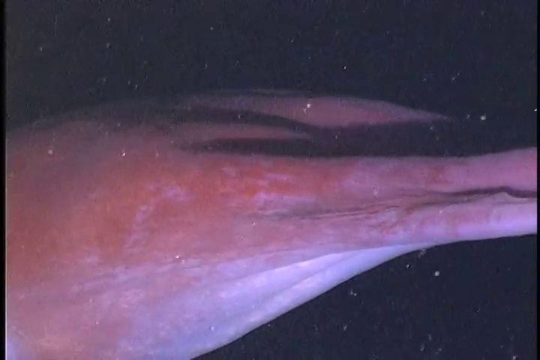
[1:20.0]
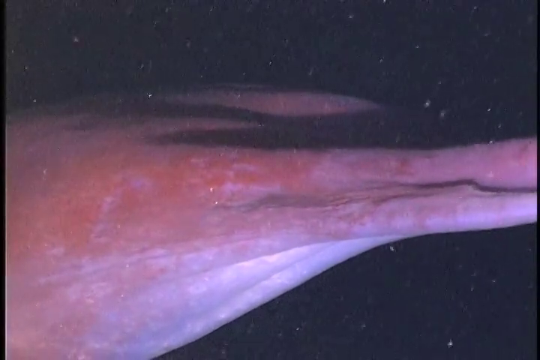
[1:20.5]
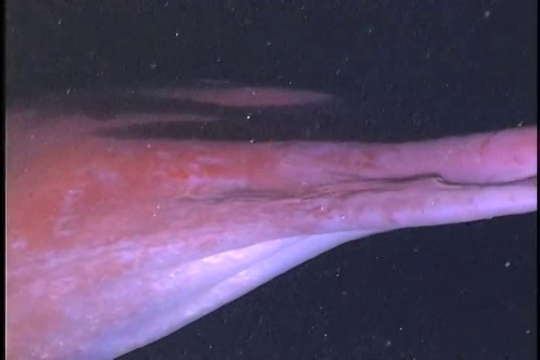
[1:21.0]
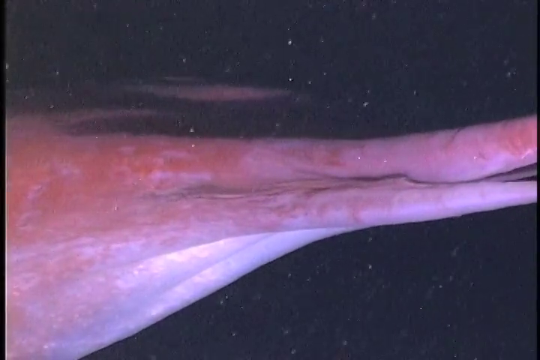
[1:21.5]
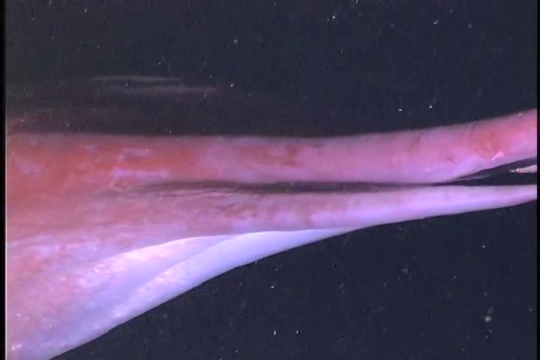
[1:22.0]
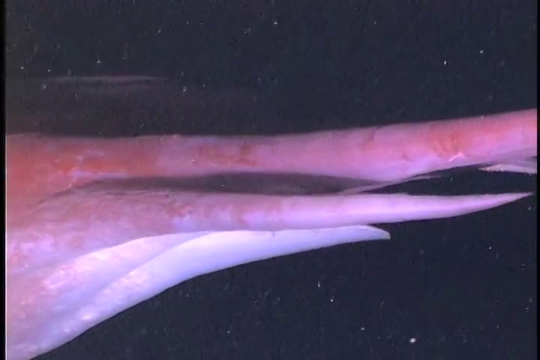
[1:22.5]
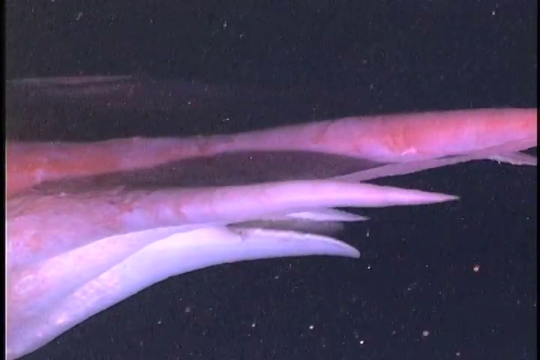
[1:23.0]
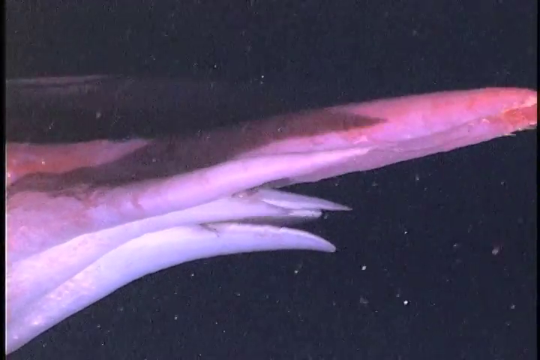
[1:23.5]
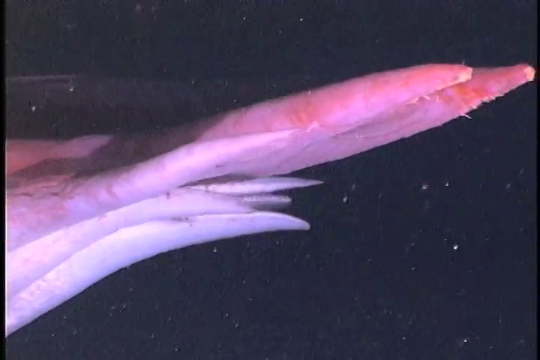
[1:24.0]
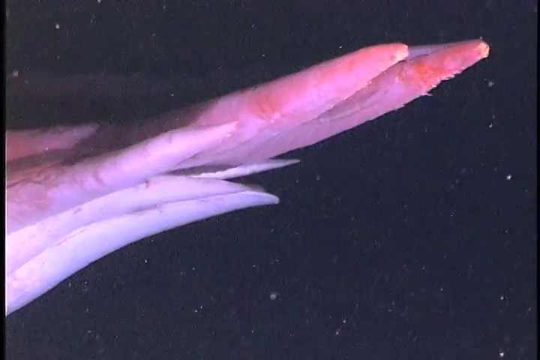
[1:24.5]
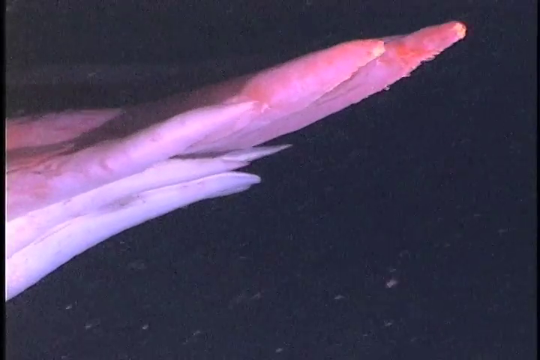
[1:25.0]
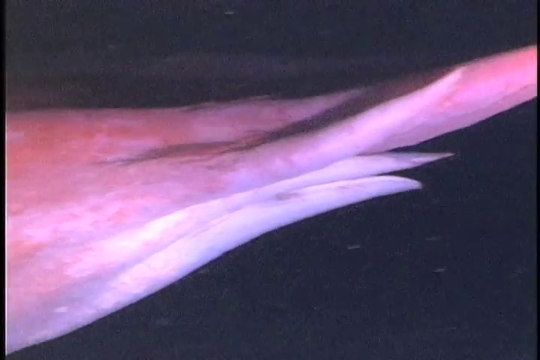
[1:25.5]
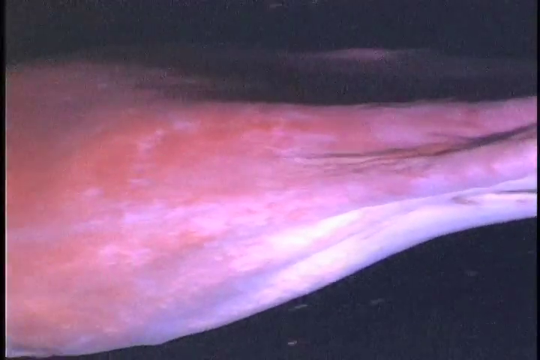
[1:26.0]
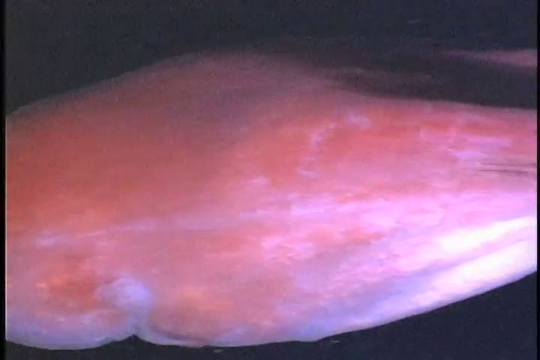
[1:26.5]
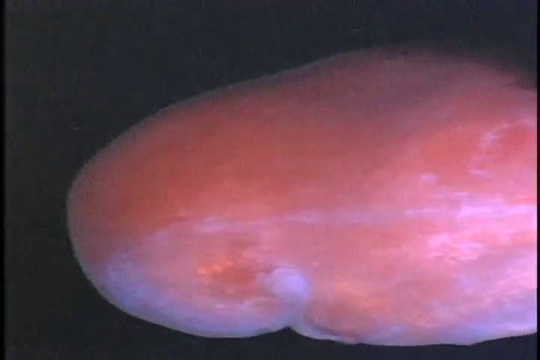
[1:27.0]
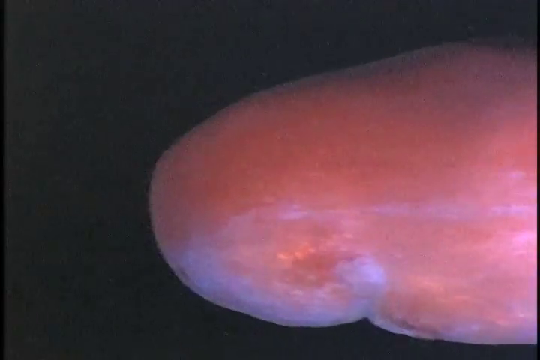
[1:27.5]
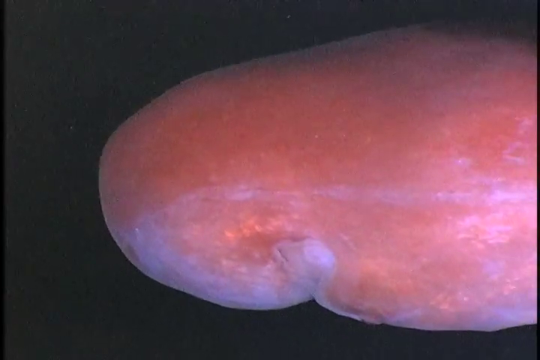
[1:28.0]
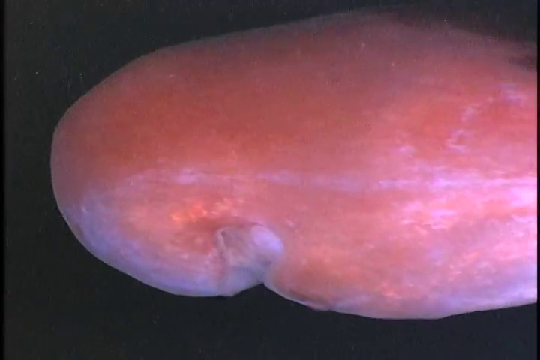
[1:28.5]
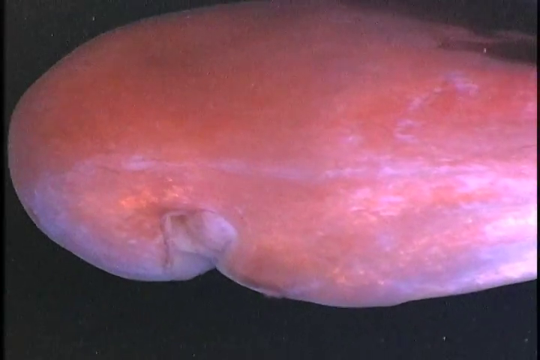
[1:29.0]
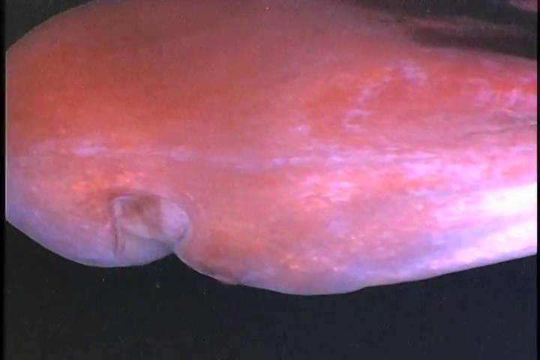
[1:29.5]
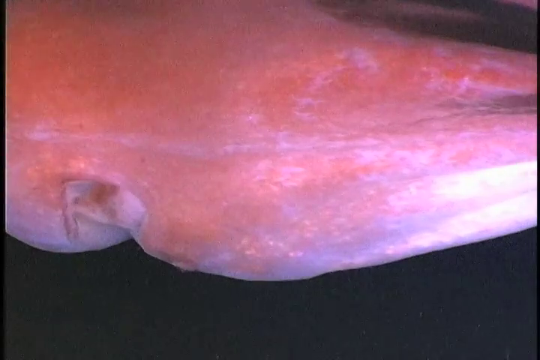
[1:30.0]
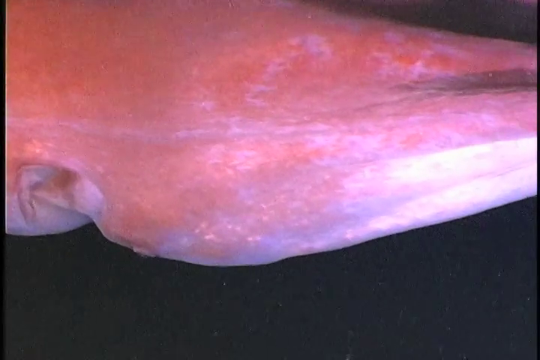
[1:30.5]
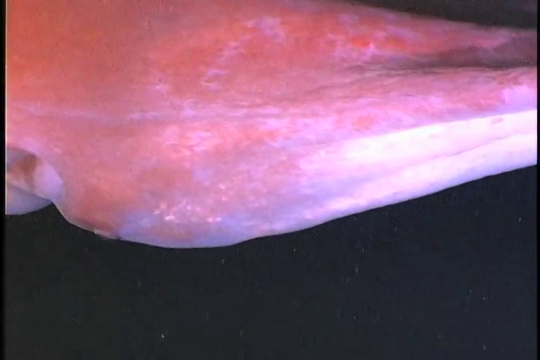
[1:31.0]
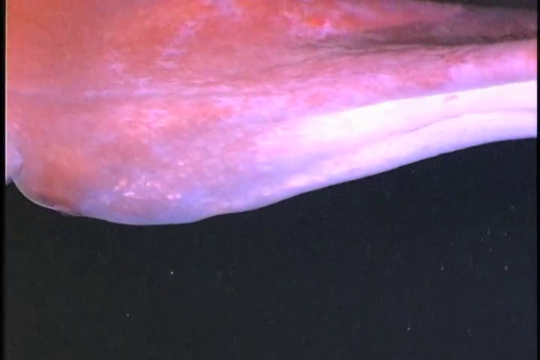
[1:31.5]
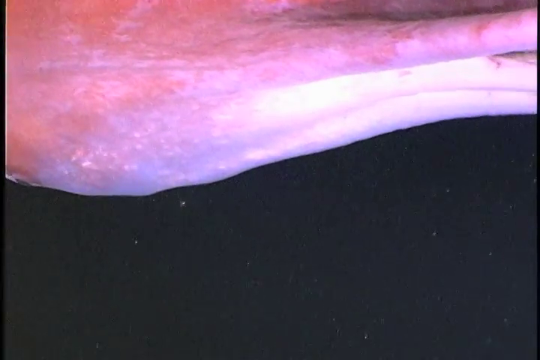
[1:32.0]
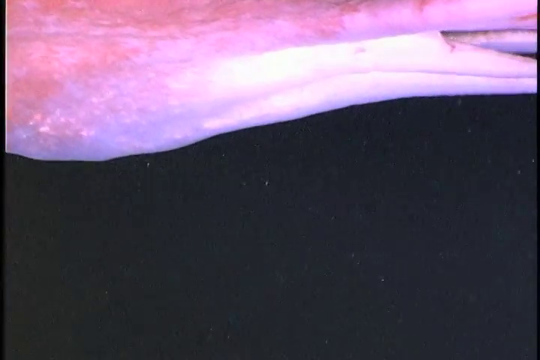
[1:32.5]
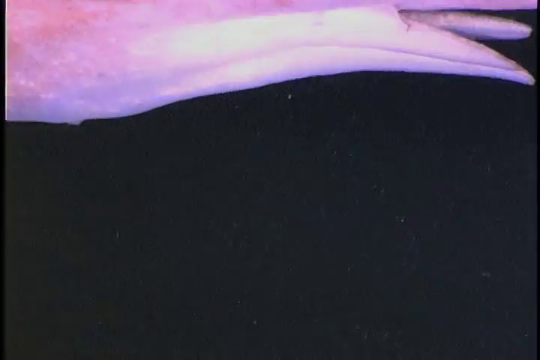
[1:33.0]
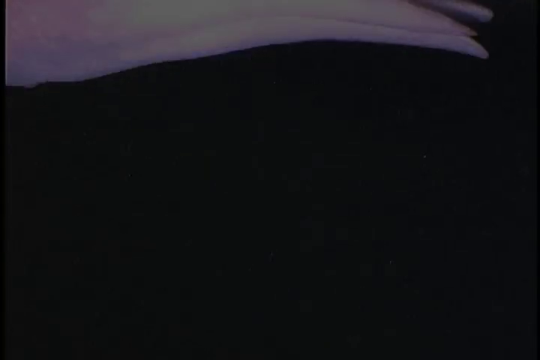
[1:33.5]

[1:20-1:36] The camera has moved close to the organism's tentacles, which in the light seem to reflect a pink color instead of the gray seen before. At the tips of the tentacles there are tiny spikes, likely soft, like taste buds. The camera moves slowly to record the body of the animal, a completely round mass with a pink and gray tone. In the lower part a hole opens, possibly its mouth, eyes, nose or ear.